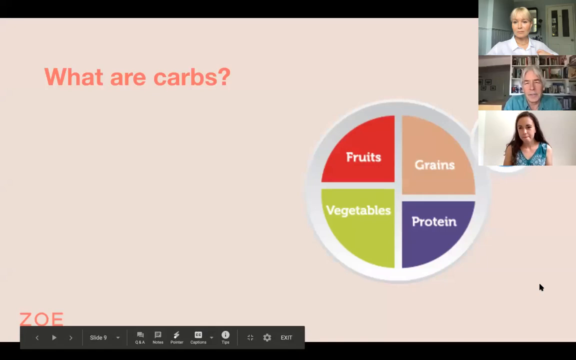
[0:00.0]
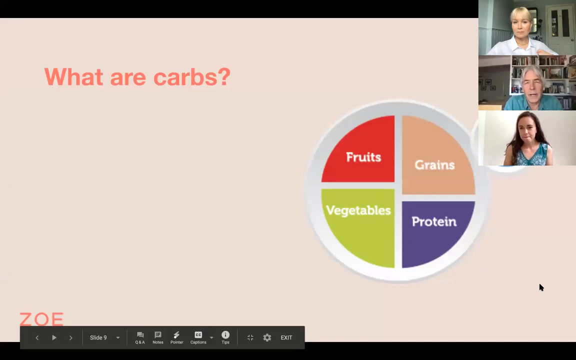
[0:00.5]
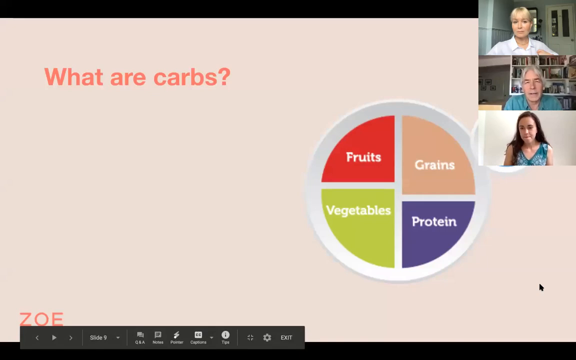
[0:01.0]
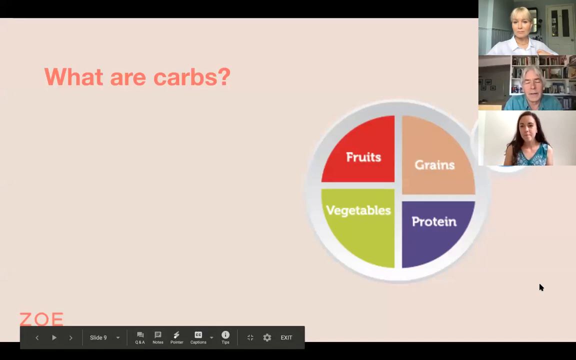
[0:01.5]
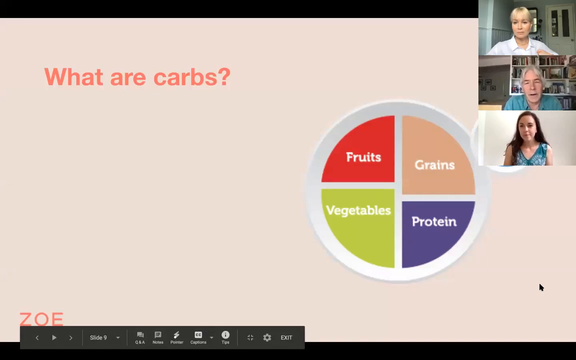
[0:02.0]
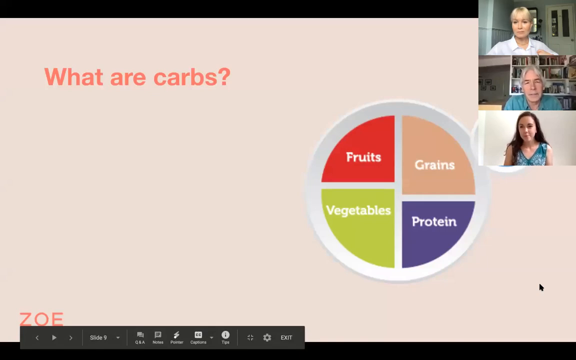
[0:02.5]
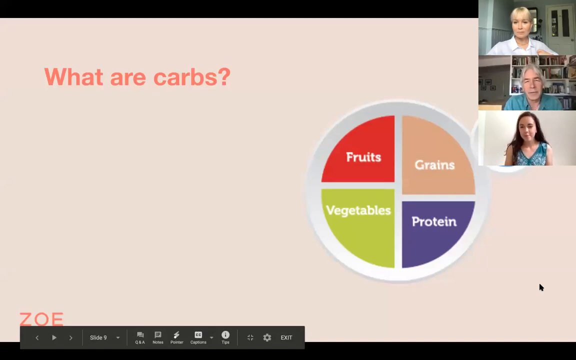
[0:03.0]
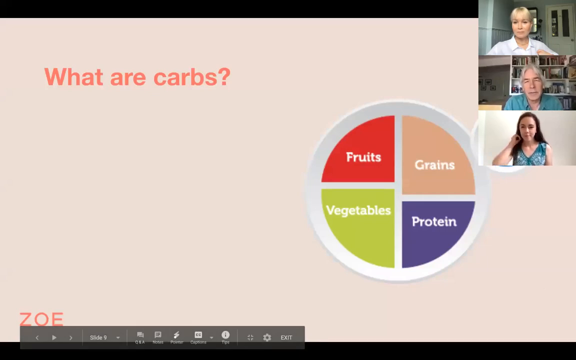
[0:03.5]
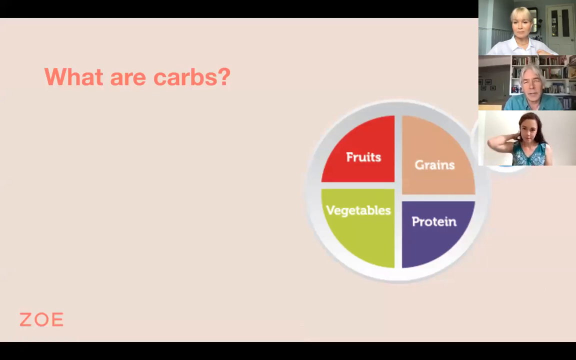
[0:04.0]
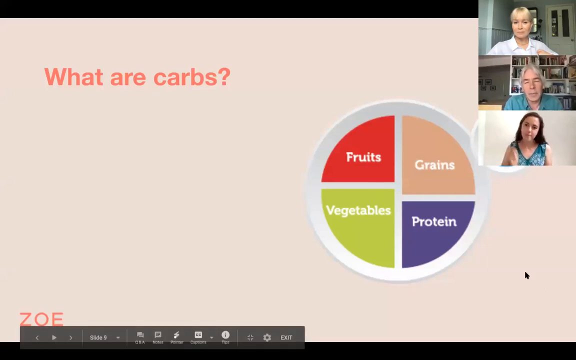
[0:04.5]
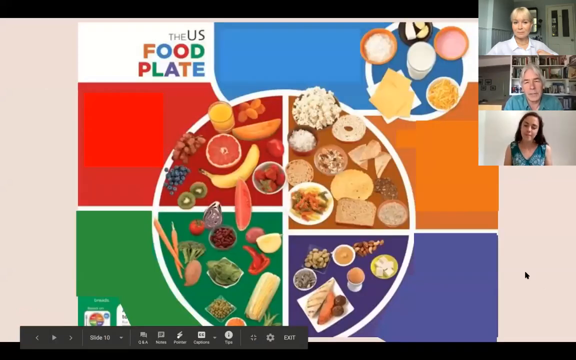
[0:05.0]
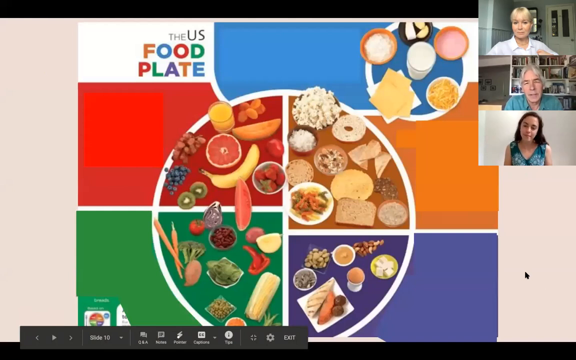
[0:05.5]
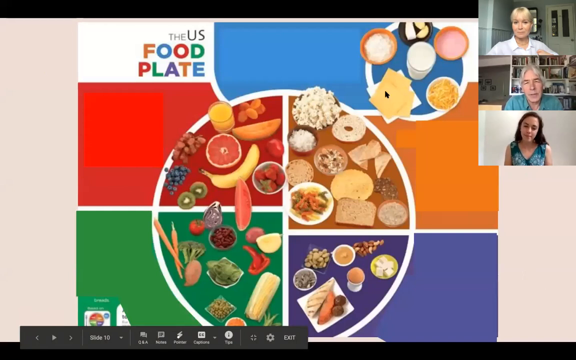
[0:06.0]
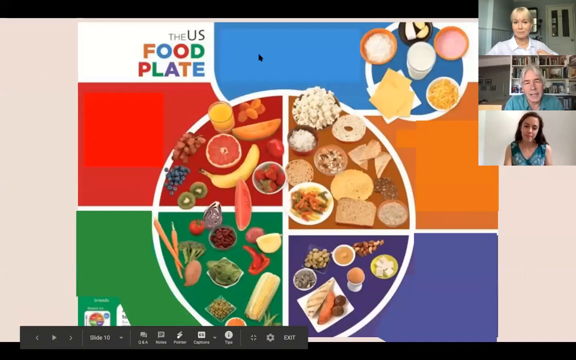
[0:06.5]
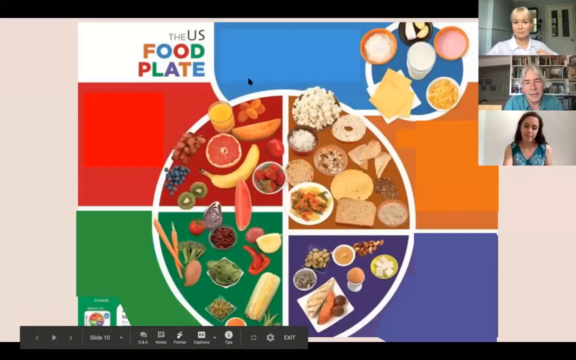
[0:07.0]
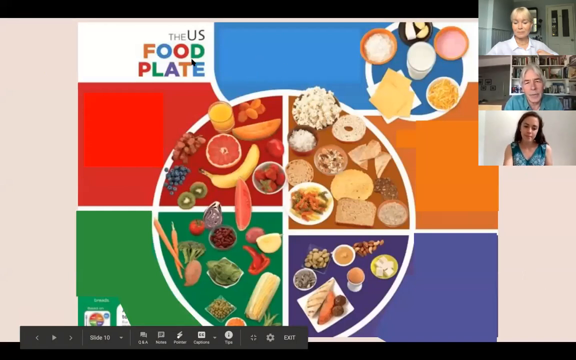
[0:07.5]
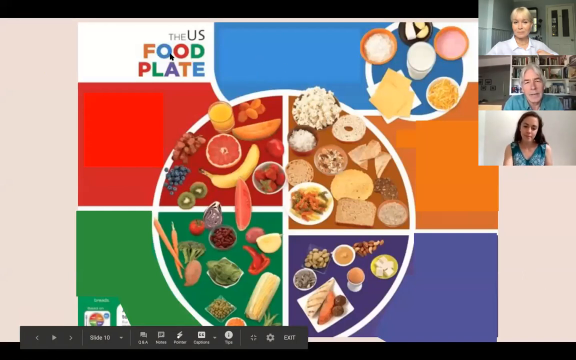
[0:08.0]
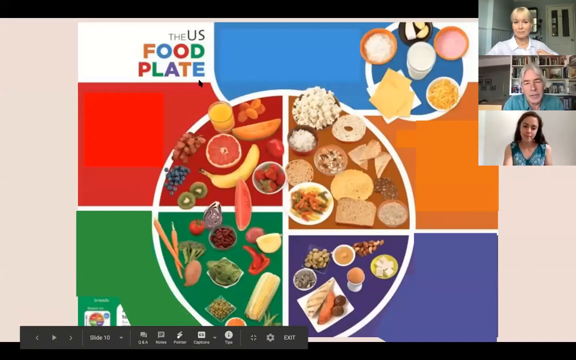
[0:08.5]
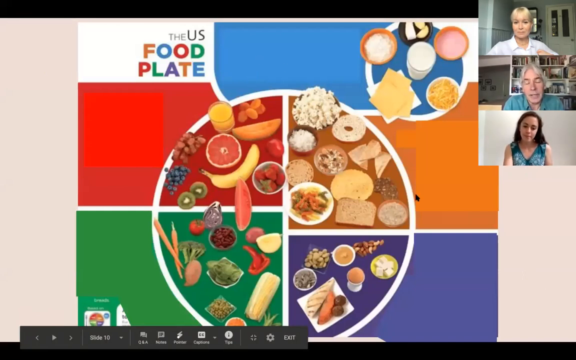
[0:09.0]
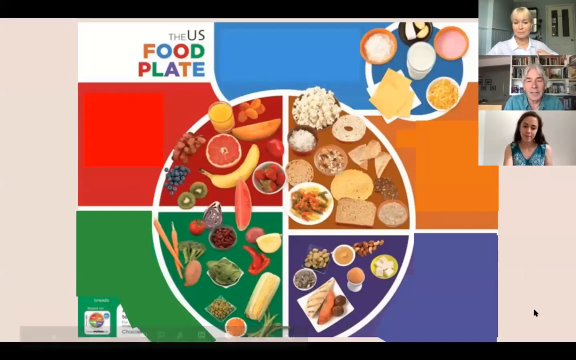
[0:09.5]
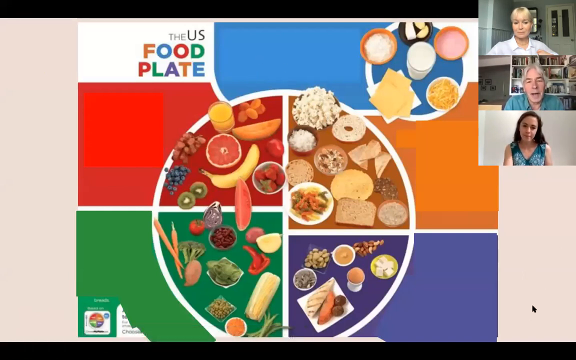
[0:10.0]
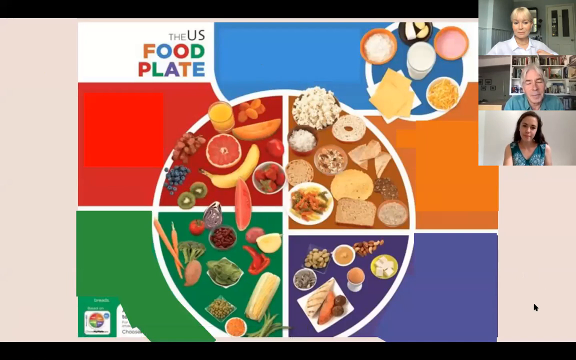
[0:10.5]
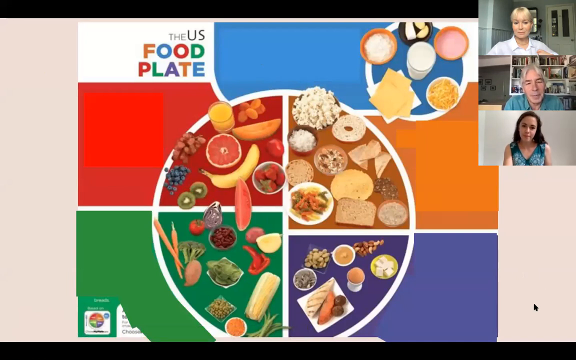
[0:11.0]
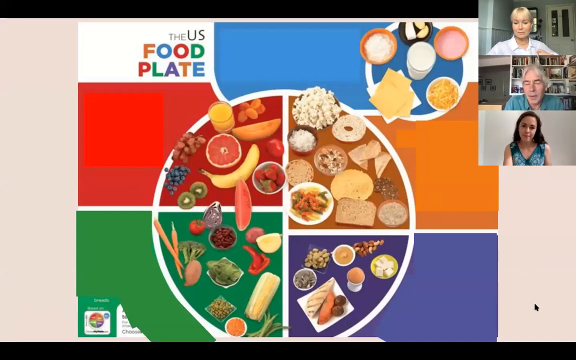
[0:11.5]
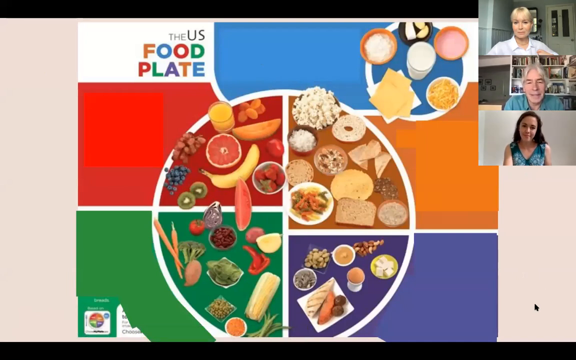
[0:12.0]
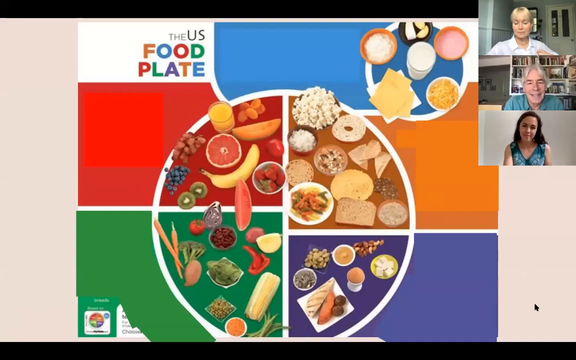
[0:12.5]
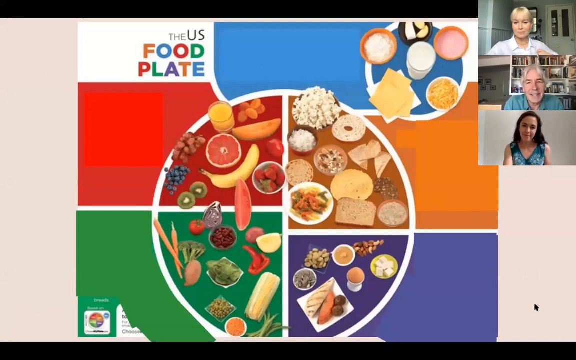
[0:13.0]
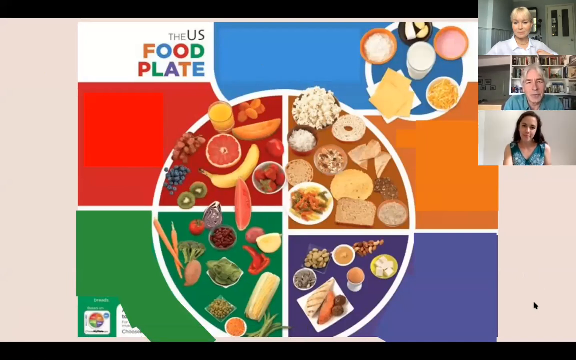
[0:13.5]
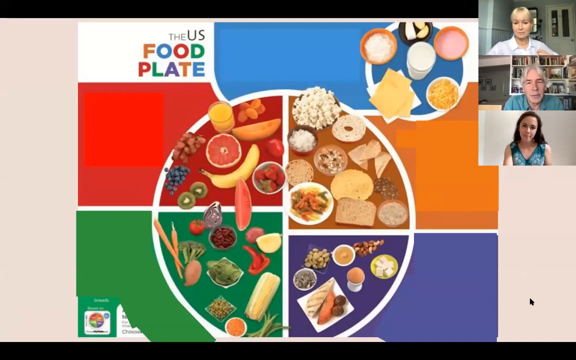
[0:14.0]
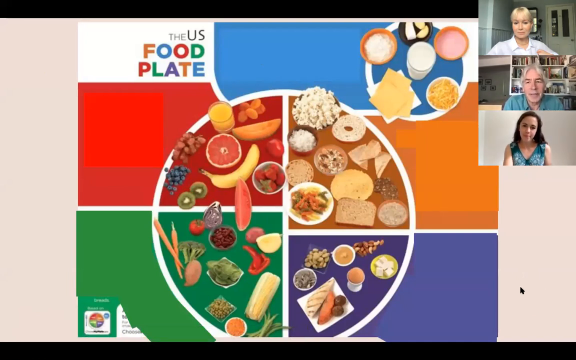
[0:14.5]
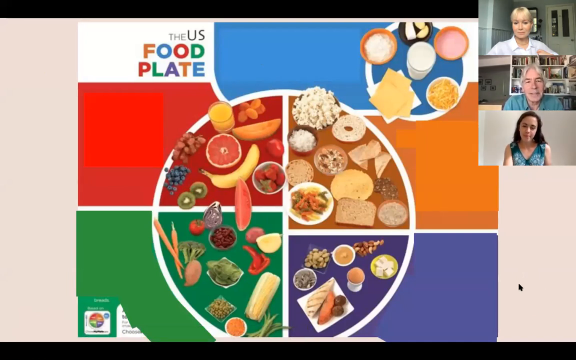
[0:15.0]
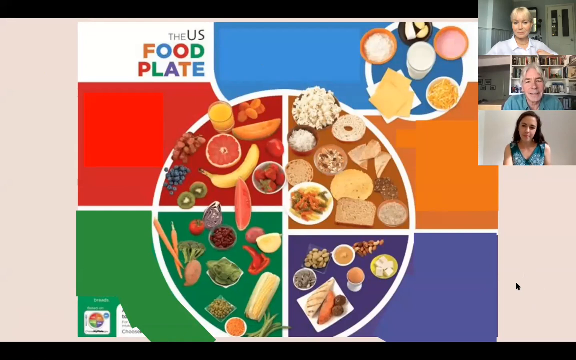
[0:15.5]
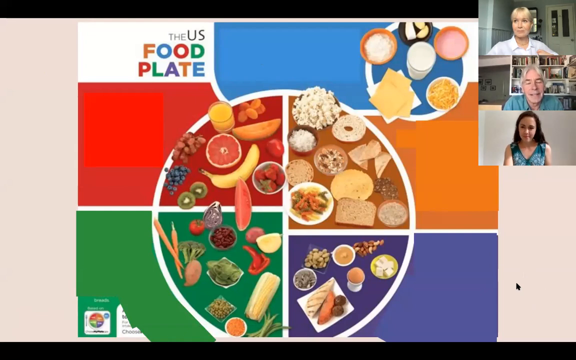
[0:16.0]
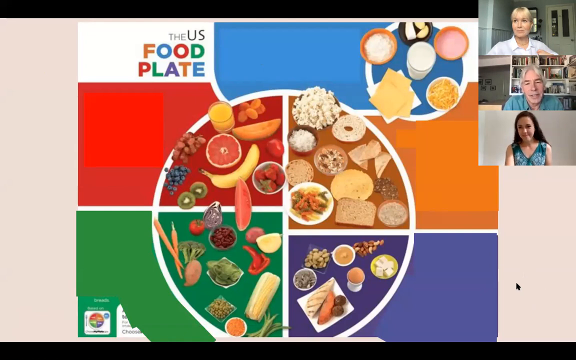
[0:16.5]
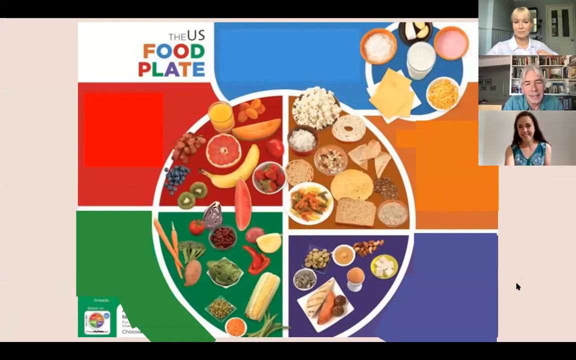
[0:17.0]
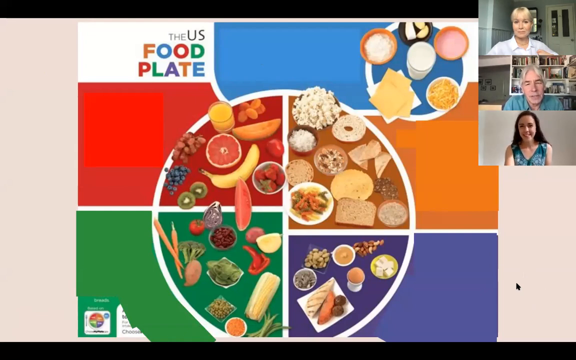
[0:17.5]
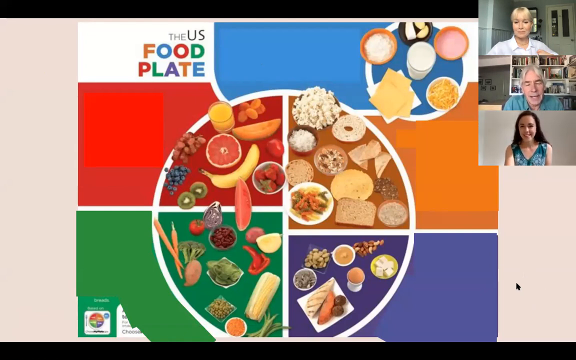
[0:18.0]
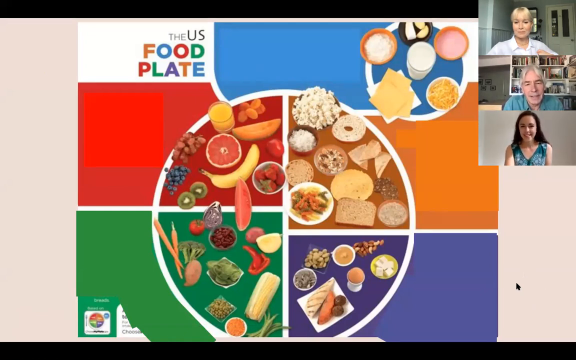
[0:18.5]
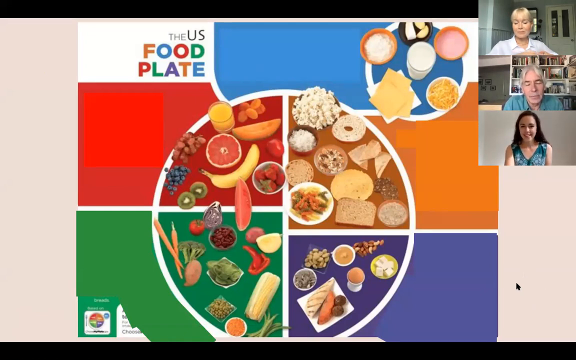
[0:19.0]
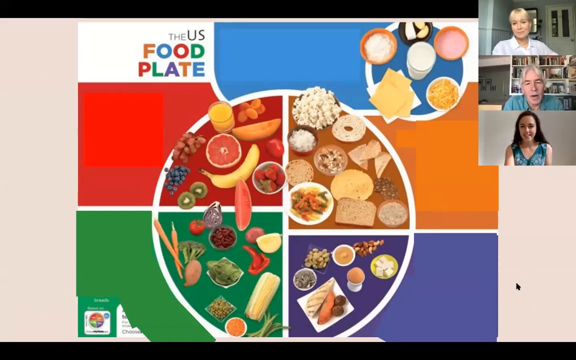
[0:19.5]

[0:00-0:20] The background is white with a hint of red, an extremely light pink or borderline pink-white. In the top right corner of the screen are three images of people, two females and a male. Red text at the top left corner reads "water carbs." To the left and center of the images in the top right corner is what appears to be a CGI-looking plate or circle split into four segments: red, peach, green, and purple. White text inside the red segment reads "fruits," inside the peach segment "grains," inside the green segment "vegetables," and inside the purple segment "protein." In the bottom left corner of the screen is the word "ZOE" in red text. The male in the top right corner is talking, so the images are not stills but three different video displays, and the woman at the bottom of the three is nodding. The main screen on the left then shows the U.S. food plate: a circle with four segments, each containing different types of food.